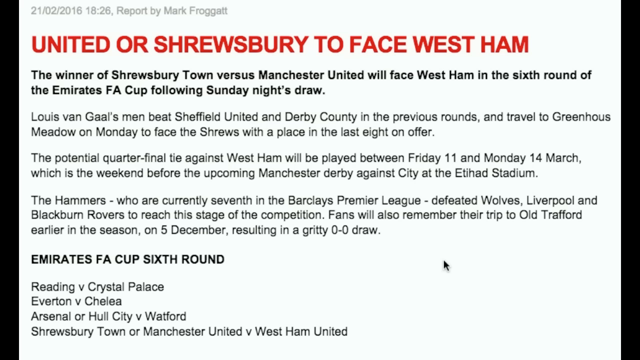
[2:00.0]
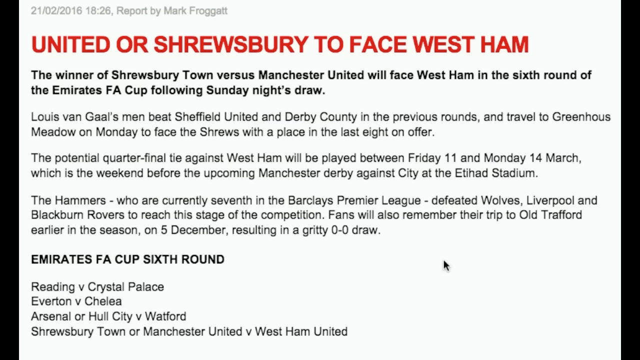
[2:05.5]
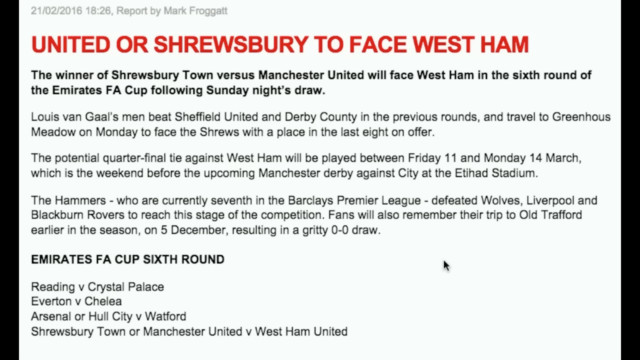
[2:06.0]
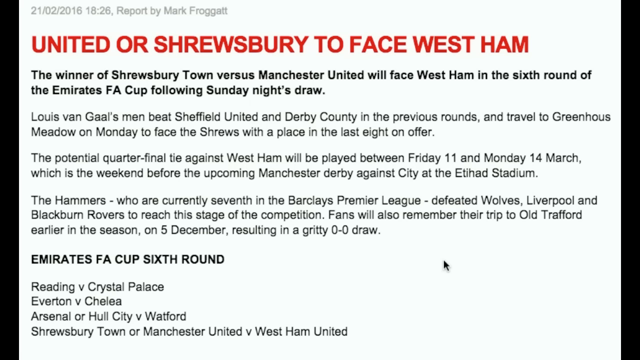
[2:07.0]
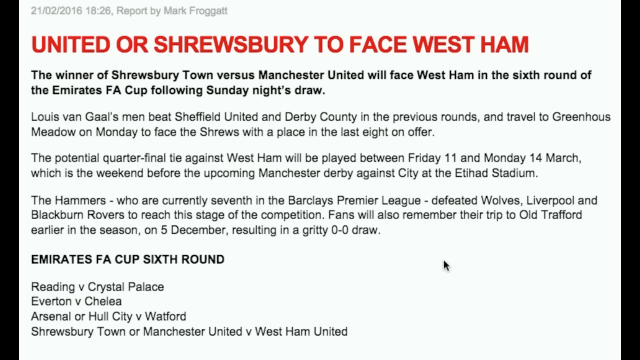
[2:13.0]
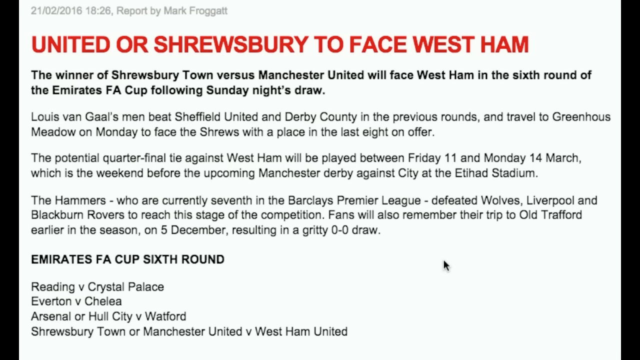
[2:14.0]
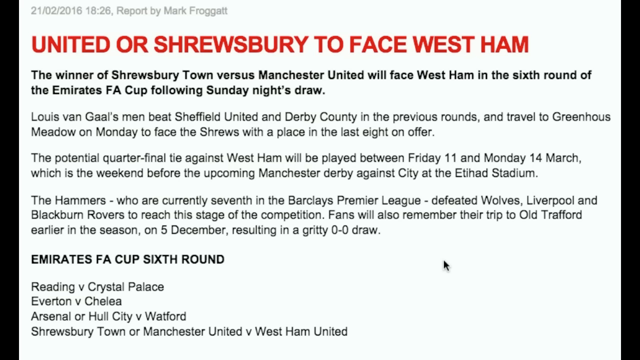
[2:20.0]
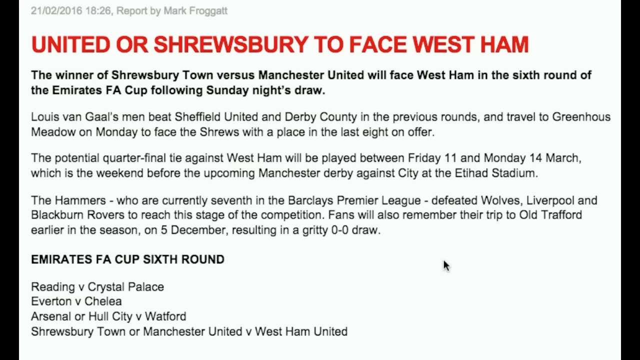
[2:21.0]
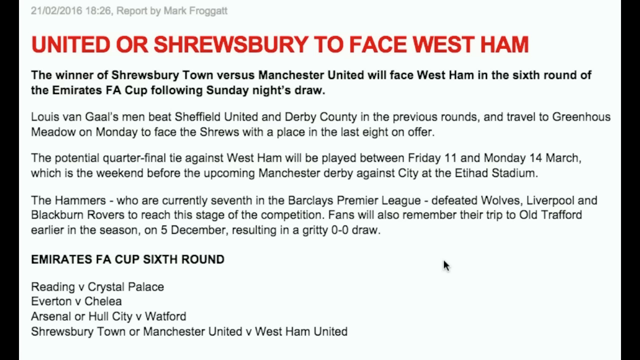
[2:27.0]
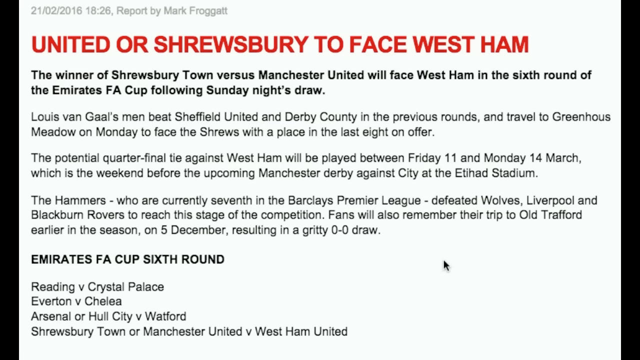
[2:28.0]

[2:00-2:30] A computer screenshot of what is possibly a newspaper article is shown. At the top, in big red capital letters, it reads "United or Shrewsbury to face West Ham". Underneath, in bold black text: "the winner of Shrewsbury Town versus Manchester United will face West Ham in the sixth round of the Emirates FA Cup following Sunday night's draw." Three small blurbs in regular black text follow, separated like paragraphs, then bold capital text reading "Emirates FA Cup sixth round", and then regular black text showing which places are playing which. A small black mouse cursor arrow is in the bottom right-hand corner, in a white area, not covering any text. At the very top left, in grayed-out text, is the date "21/02/2016", a military time of "18:26", and "report by Mark Froggatt".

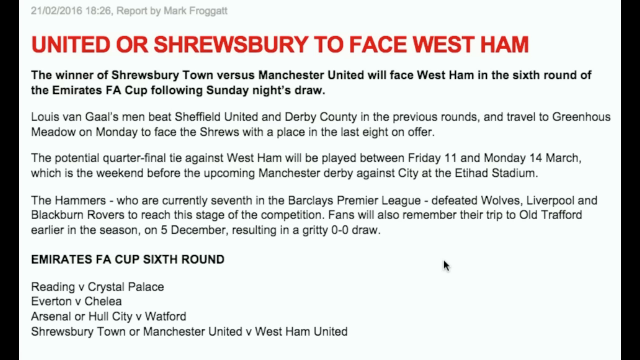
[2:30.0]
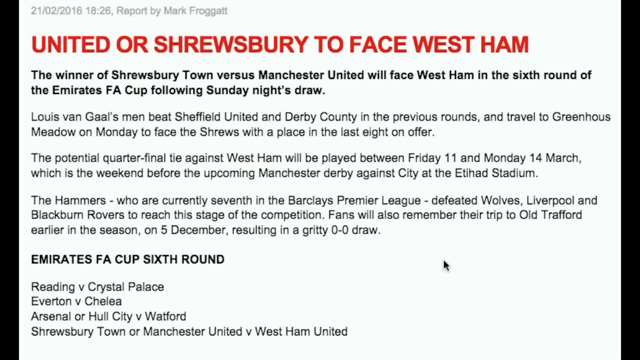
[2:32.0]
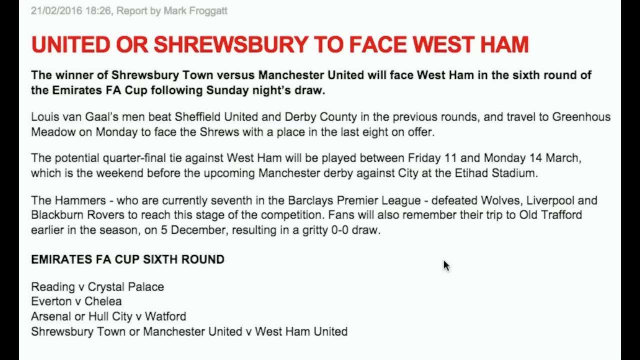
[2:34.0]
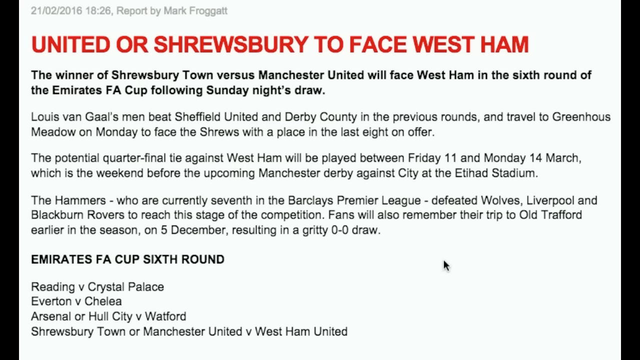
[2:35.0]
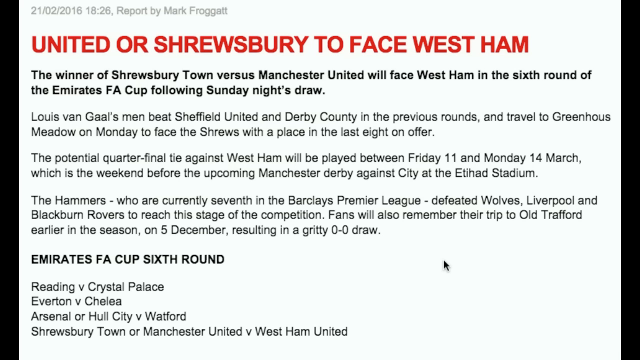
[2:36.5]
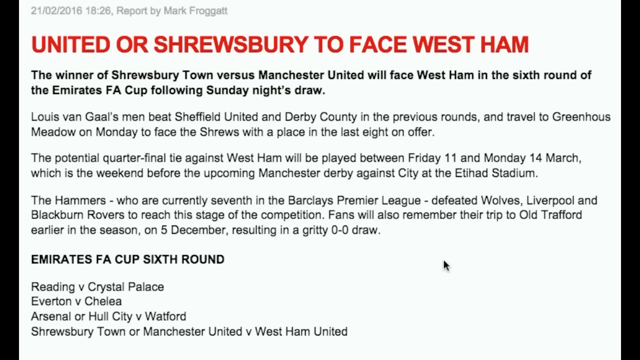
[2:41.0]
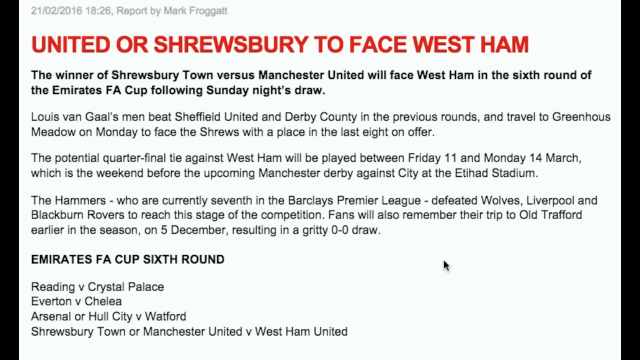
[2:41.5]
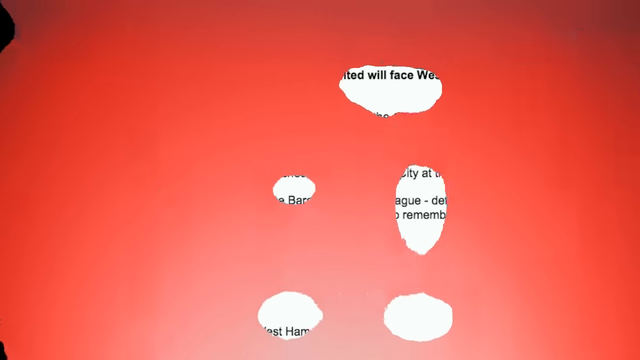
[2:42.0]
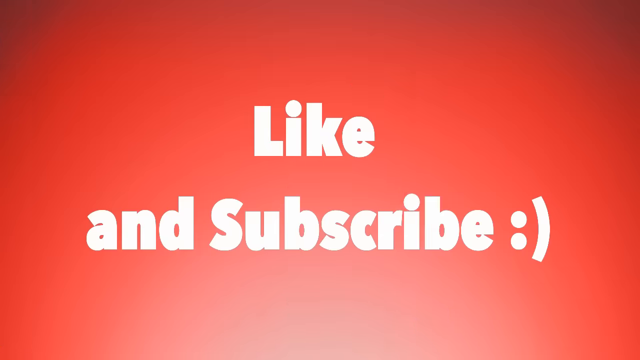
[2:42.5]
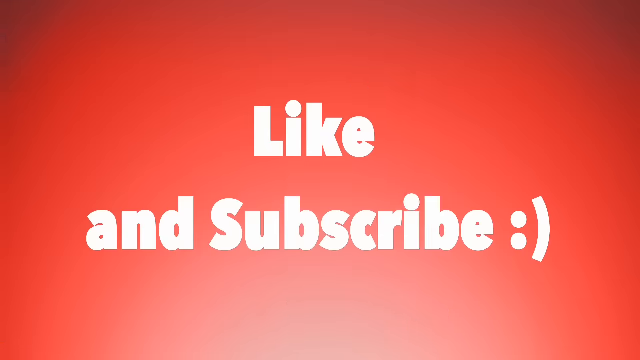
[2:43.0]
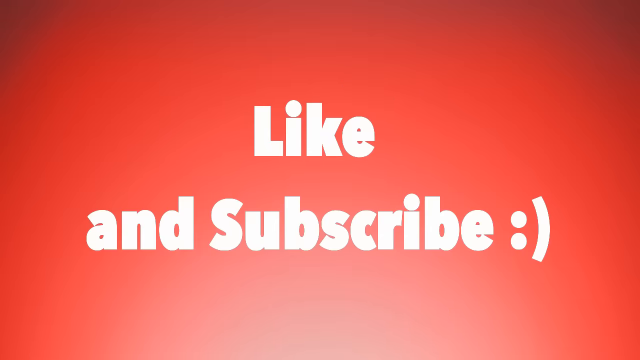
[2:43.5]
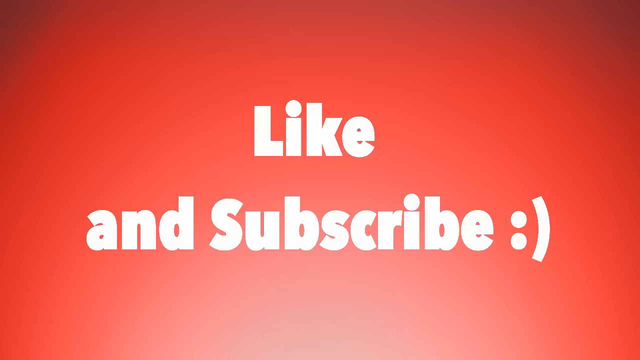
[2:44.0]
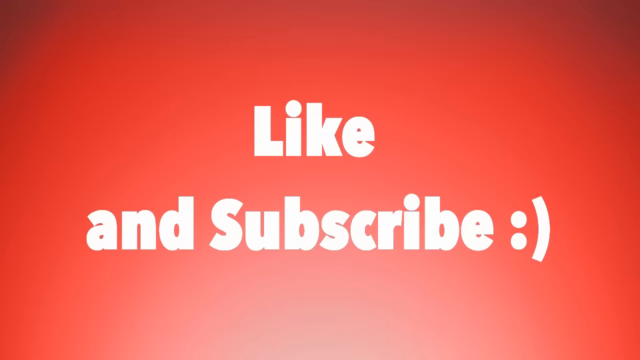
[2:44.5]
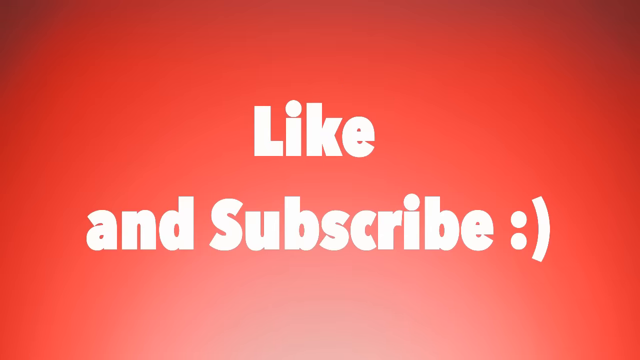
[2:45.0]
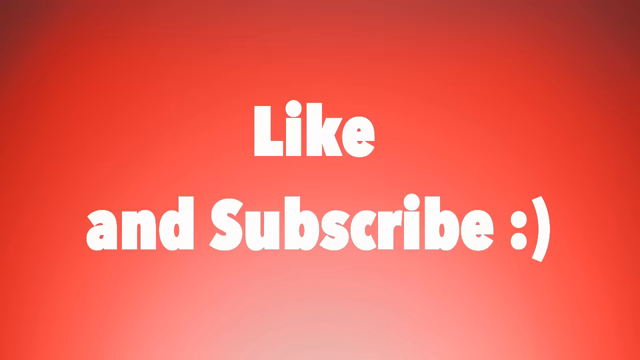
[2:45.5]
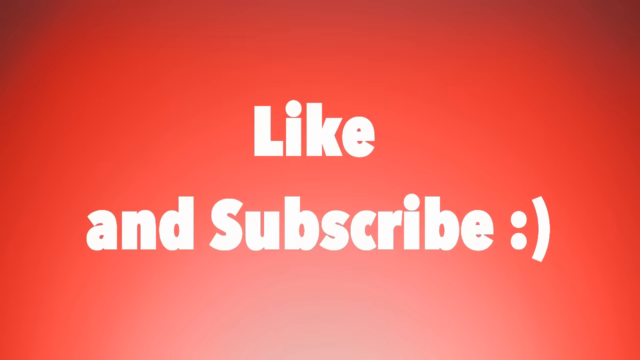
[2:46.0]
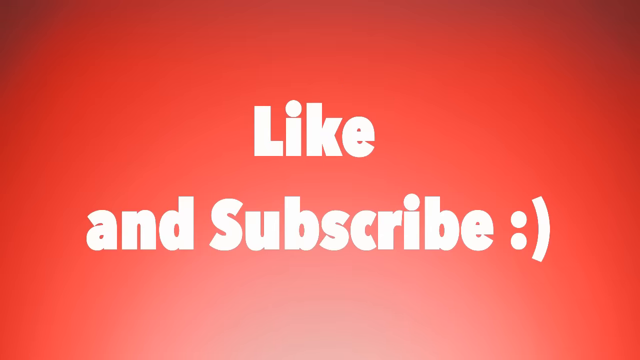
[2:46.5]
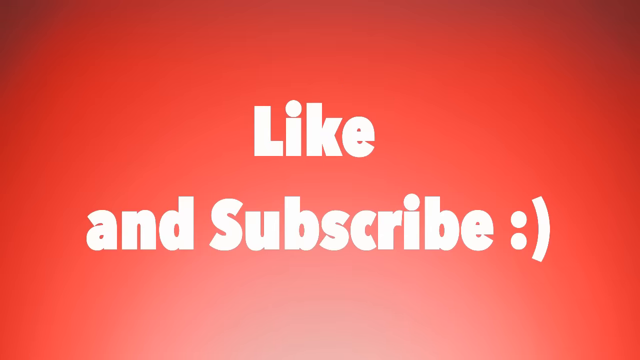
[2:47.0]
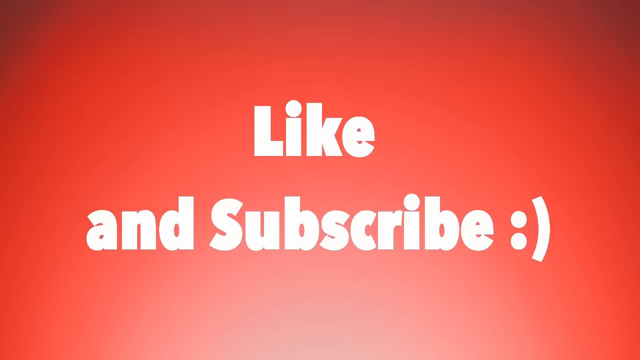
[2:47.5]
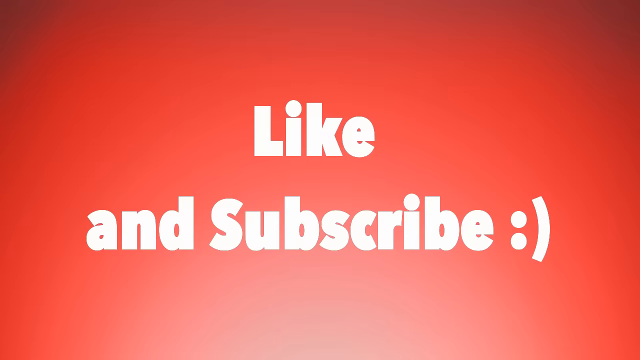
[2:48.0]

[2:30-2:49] The same screenshot or screen recording of someone's computer is shown, with the small mouse cursor in the bottom right. At the top, in red capital letters, it reads "United or Shrewsbury to face West Ham", and underneath, in bold black text, "the winner of Shrewsbury Town versus Manchester United will face West Ham in the sixth round of the Emirates FA Cup following Sunday night's draw." Below are three small blurbs separated like paragraphs, then capital letters reading "Emirates FA cup sixth round", then four lines of regular black text saying which places play which. The cursor does not appear to be moving. Suddenly red blotches appear on the screen, almost like paint spills, and they quickly turn the whole screen red. The red background is slightly darker along the edges and lighter red in the middle. Two lines of thick white letters appear: the first reads "like" and the second "and subscribe", followed by a colon and a curvy mark forming a smiley face.